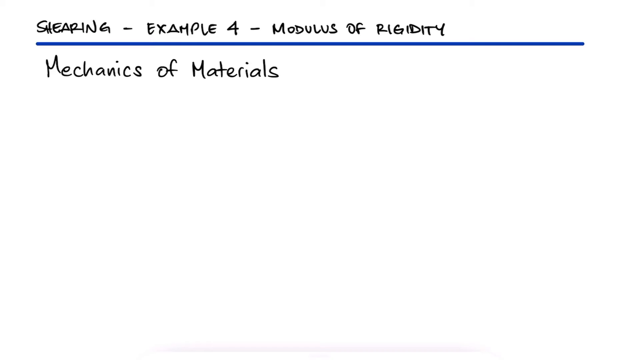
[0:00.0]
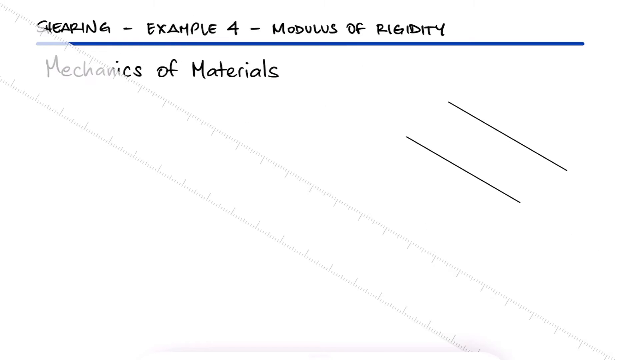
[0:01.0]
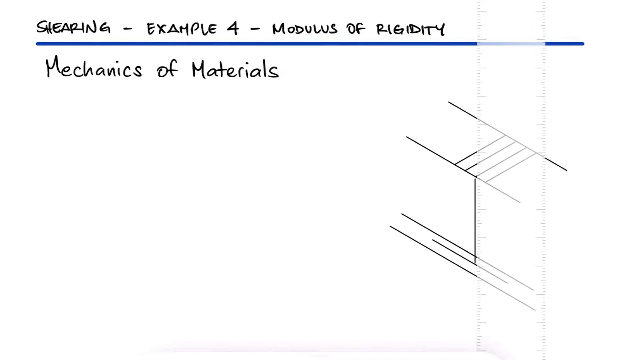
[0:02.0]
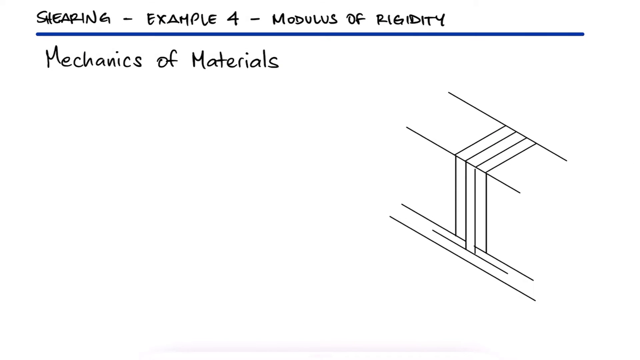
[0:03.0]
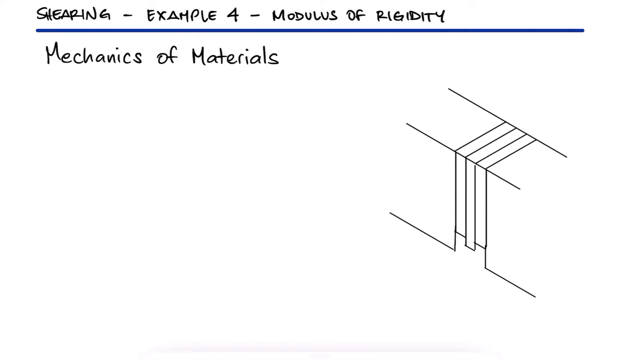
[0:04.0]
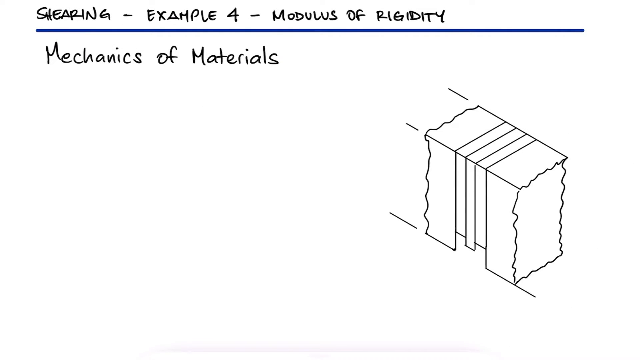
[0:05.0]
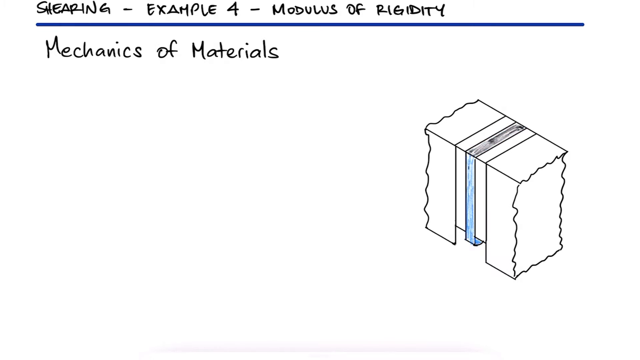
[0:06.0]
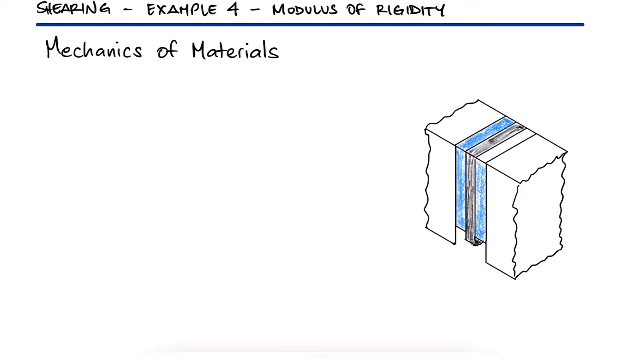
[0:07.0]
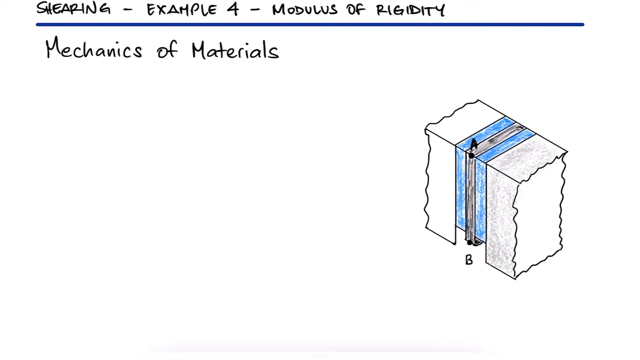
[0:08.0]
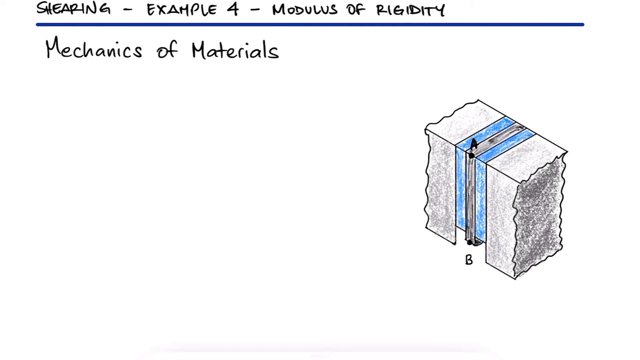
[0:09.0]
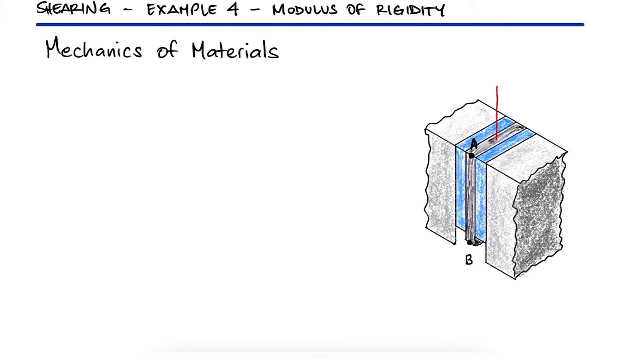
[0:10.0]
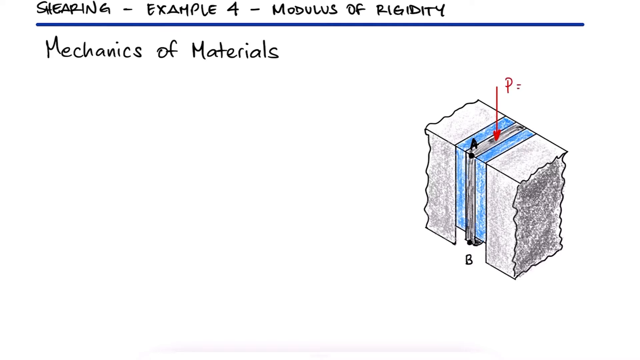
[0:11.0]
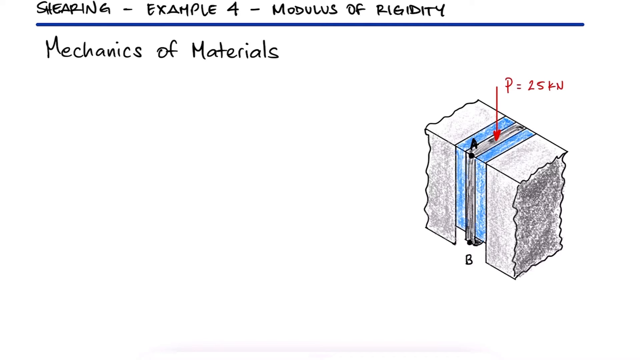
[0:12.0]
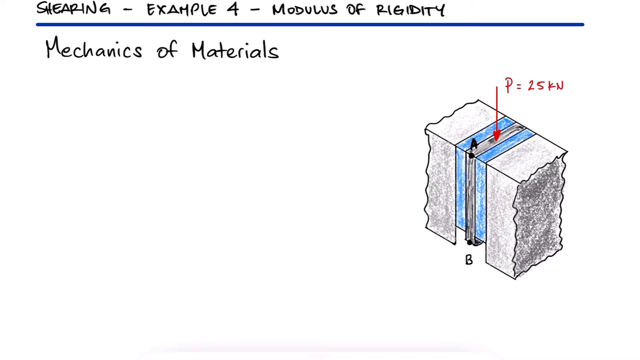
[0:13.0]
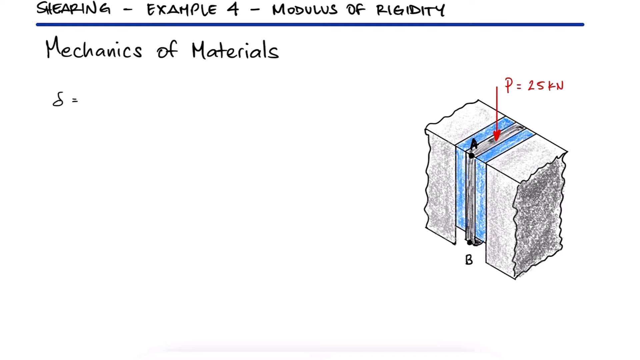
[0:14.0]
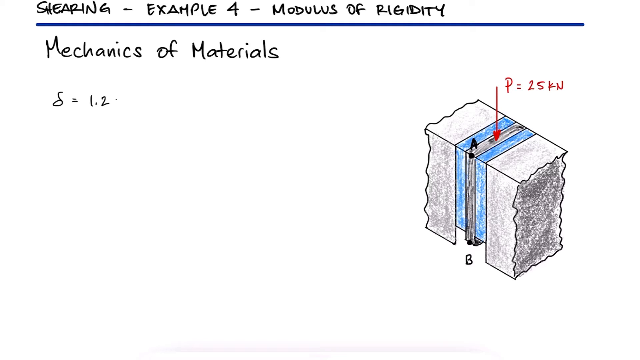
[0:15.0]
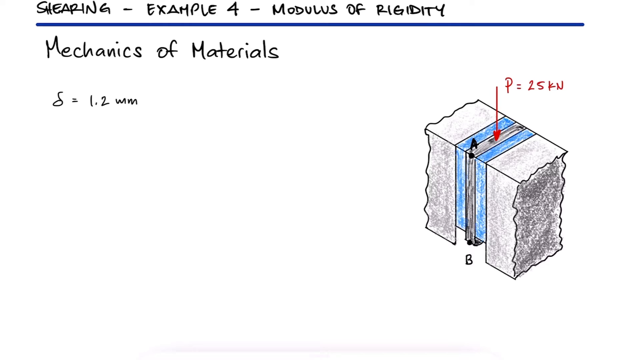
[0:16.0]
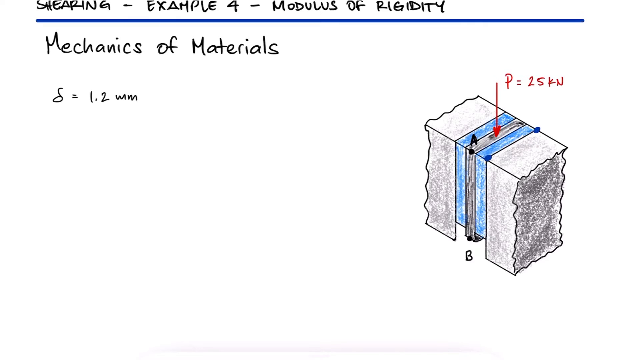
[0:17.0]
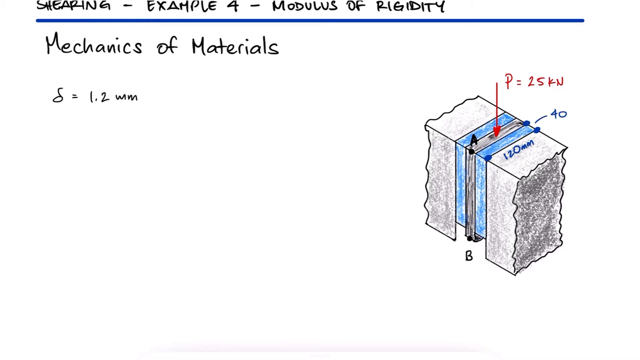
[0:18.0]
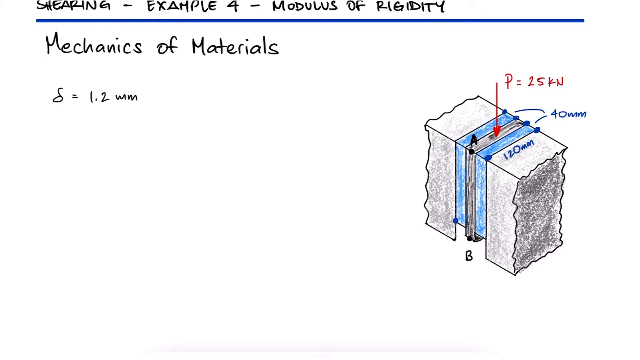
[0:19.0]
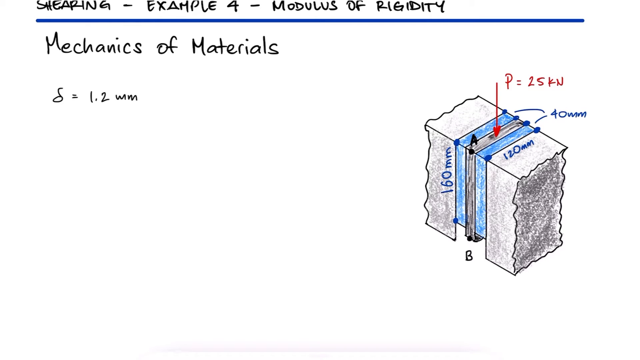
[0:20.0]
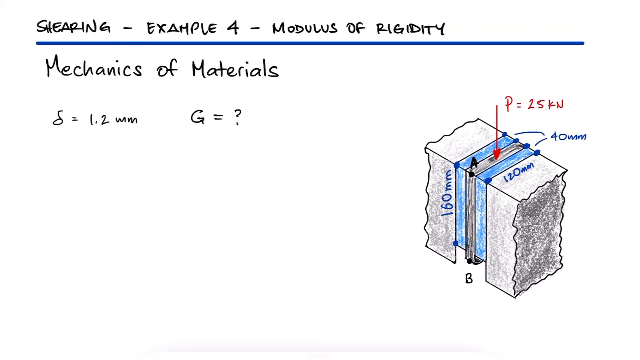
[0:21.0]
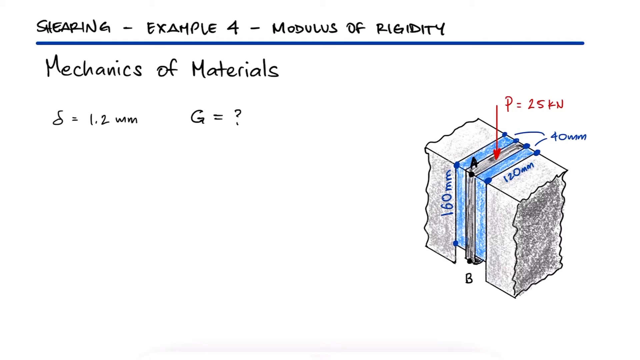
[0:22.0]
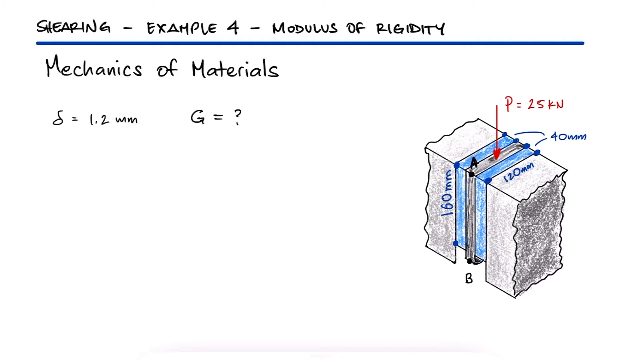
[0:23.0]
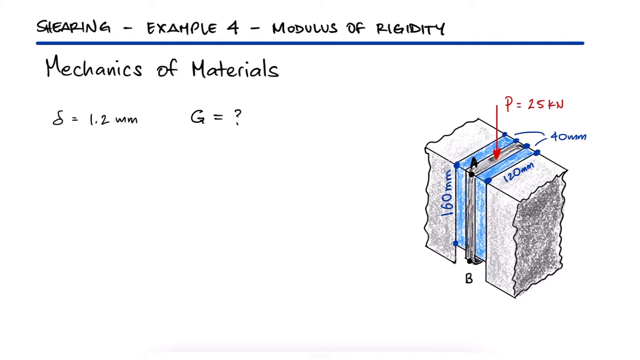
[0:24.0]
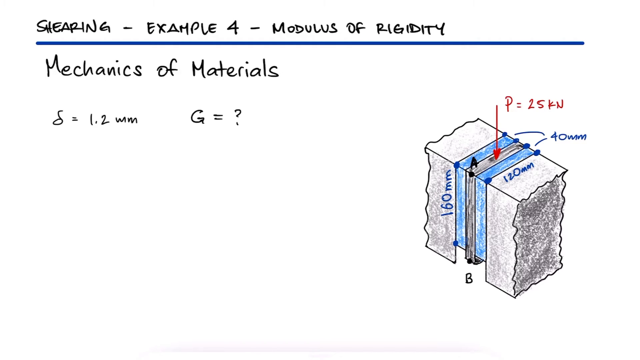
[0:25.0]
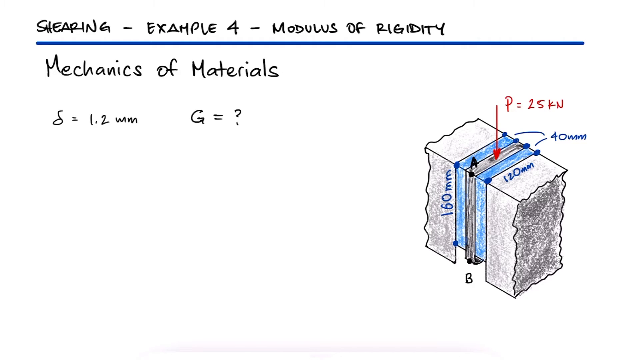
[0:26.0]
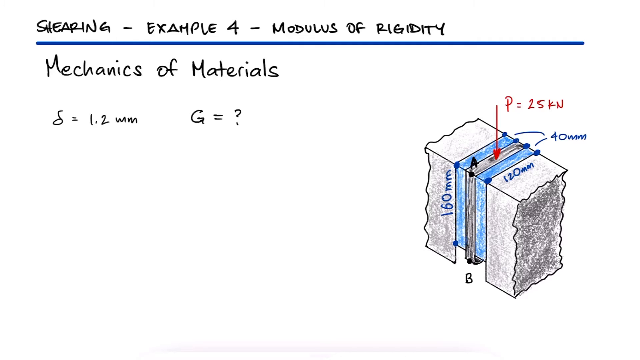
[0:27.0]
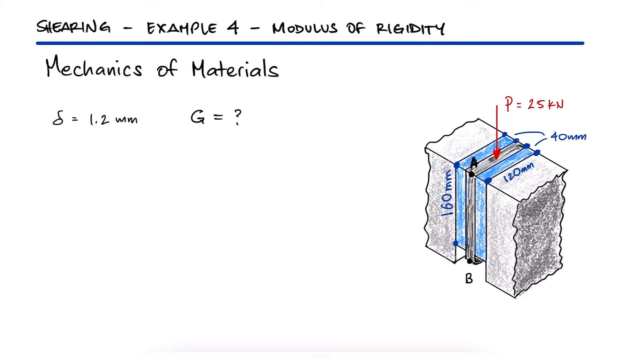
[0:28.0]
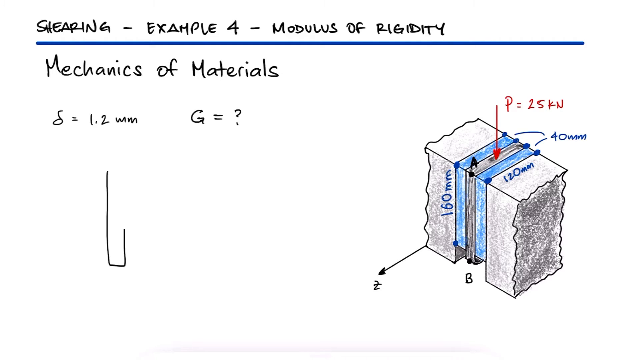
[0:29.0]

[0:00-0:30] The video opens on a white blank screen with black print on it. Under the first title, a blue line highlights the topic: shearing, example 4, the modulus of rigidity, and the first sentence indicates the subject is mechanics of materials. A ruler pops up on the screen and lines are drawn on the right-hand side. First comes what looks like a railway, and below it lines at 90 degrees; some lines are erased, and then one of the parts is colored in blue and the middle part in black as the sketch is filled in. A point B is labeled, and above it a point P with an arrow pointing to a block, along with the text "P equals to 25 K". On the left-hand side an equation gives 1.1 millimeters. More dimensions are added to the sketch: a width of 40 millimeters, a length of 120 millimeters and a height of 160 millimeters. On the bottom side a question mark appears.